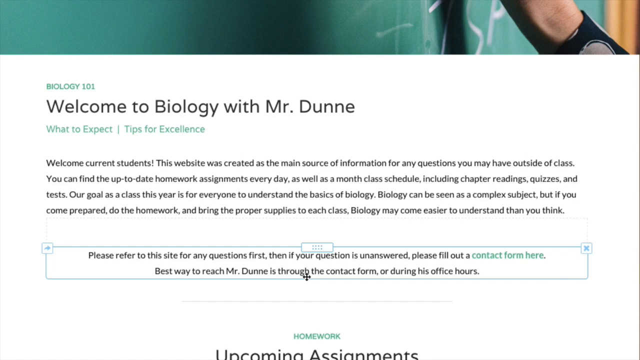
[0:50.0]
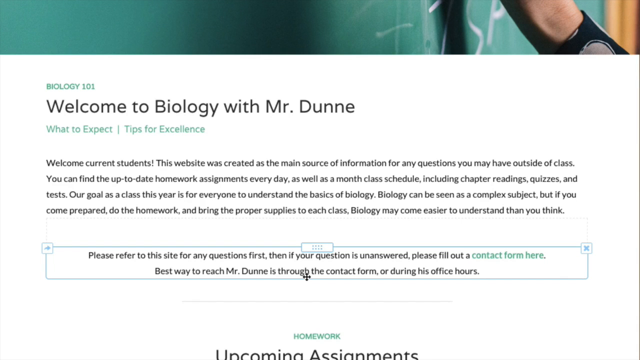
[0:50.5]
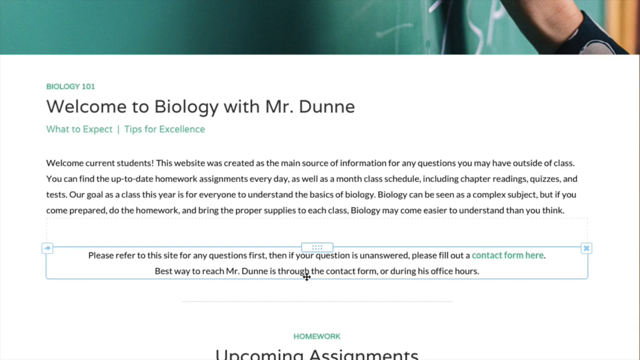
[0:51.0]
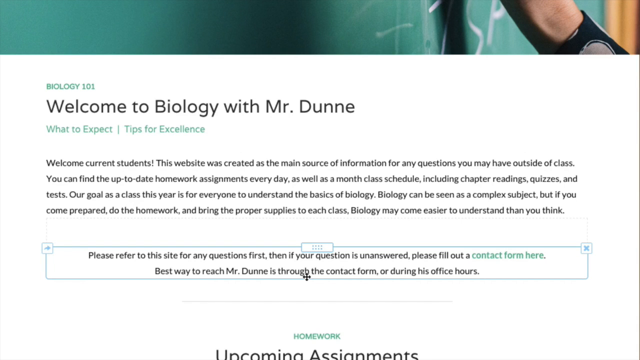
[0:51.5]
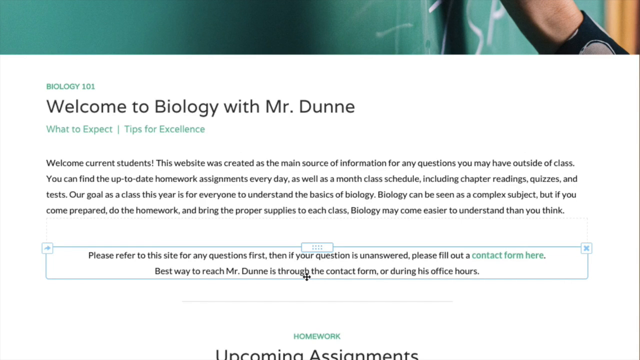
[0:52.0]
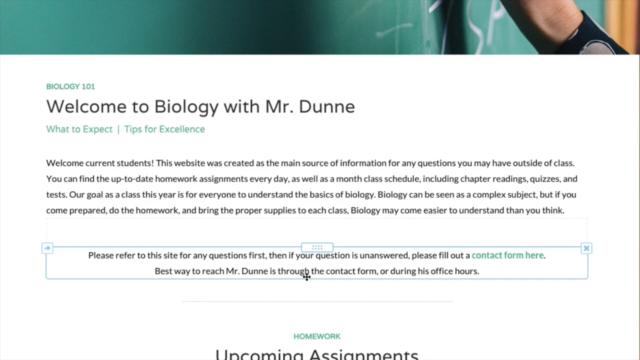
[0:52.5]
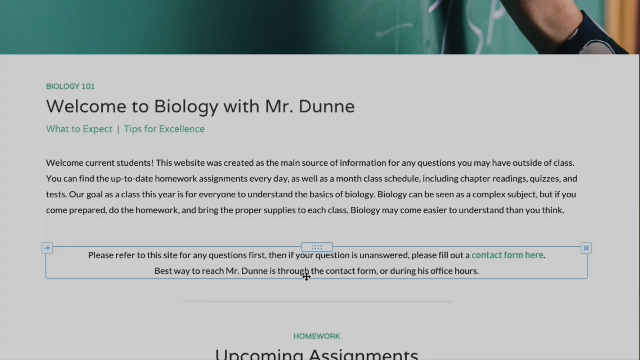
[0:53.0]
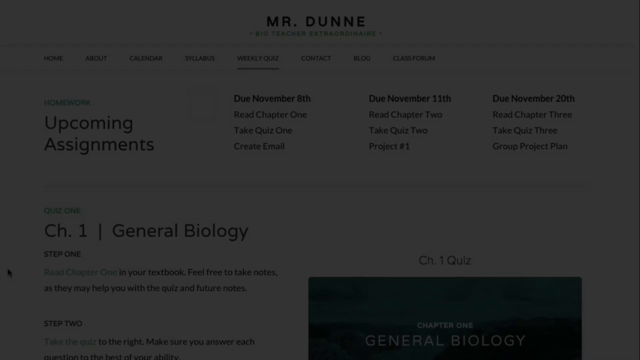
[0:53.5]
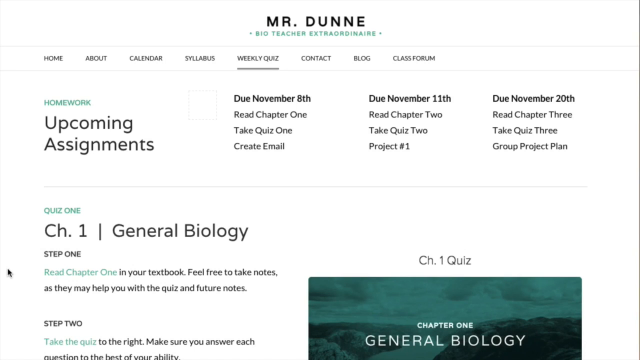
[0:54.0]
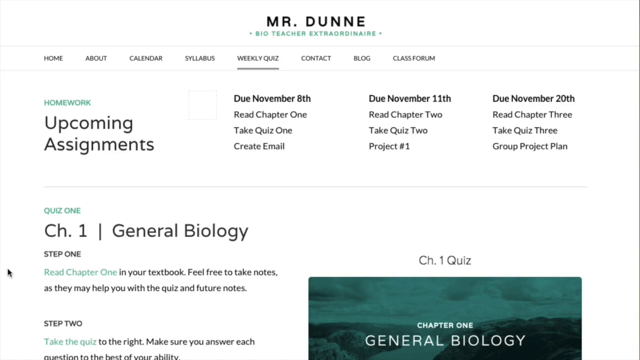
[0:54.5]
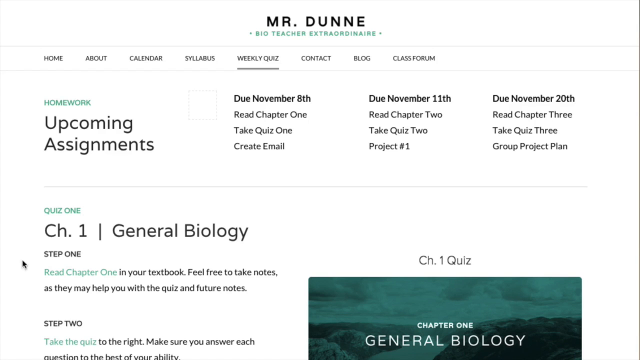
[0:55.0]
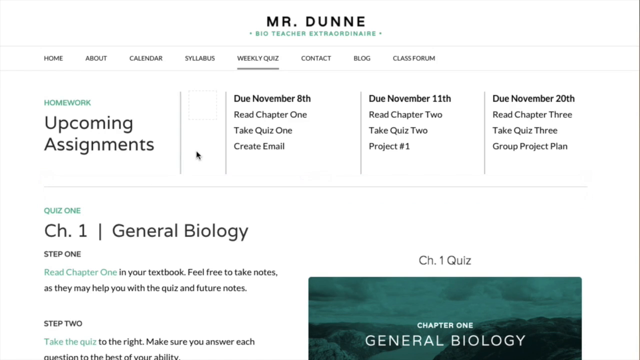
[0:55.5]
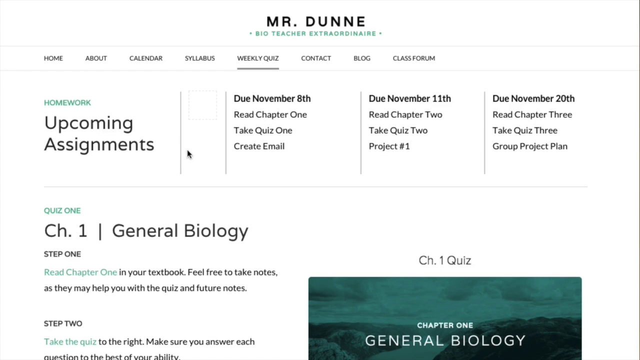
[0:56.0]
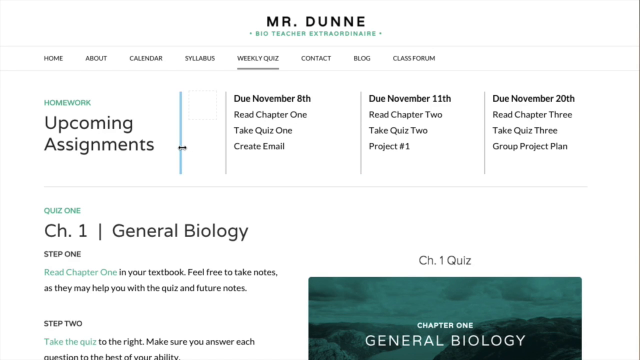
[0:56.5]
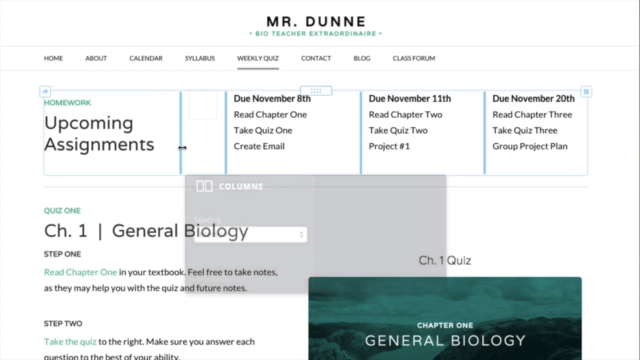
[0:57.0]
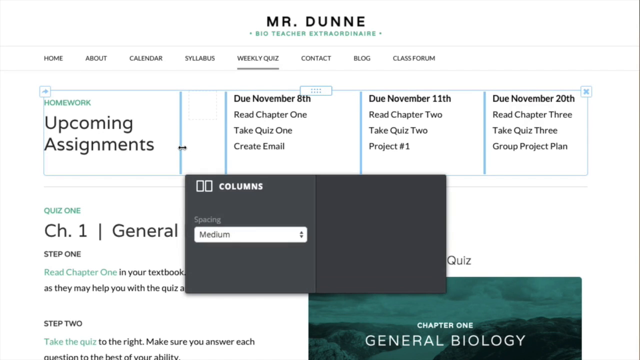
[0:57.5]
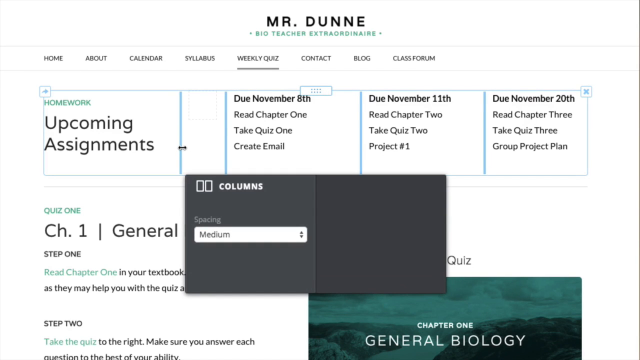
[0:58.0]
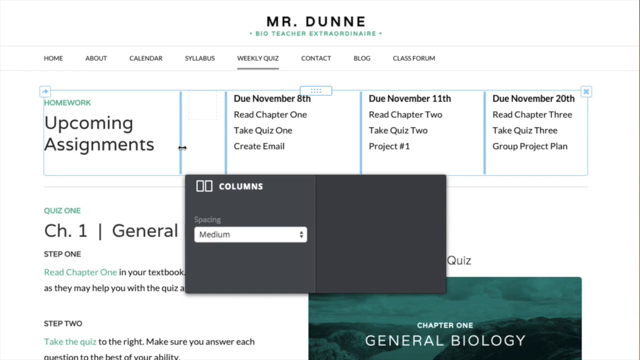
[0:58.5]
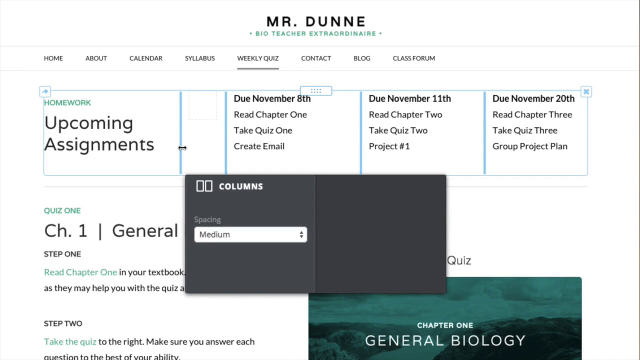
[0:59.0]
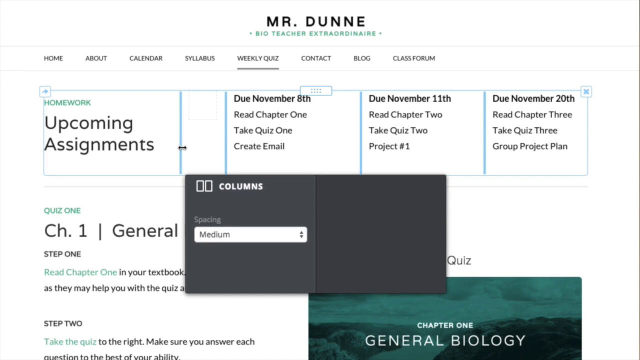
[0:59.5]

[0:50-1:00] No kids appear, only the assignment written by the teacher, with his hand visible on the board. Another page of upcoming assignments shows assignment one, assignment two and a quiz, and chapter one is called general biology.